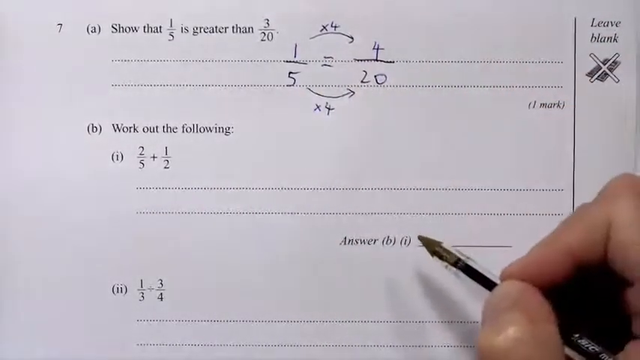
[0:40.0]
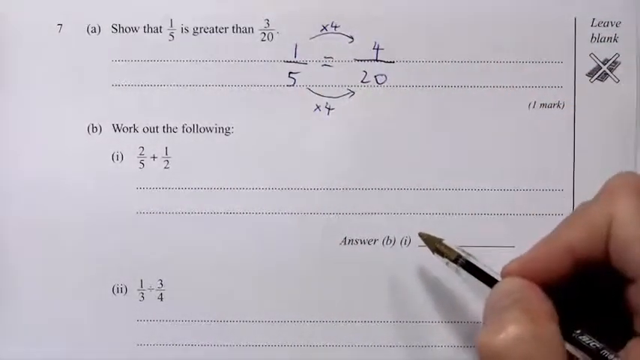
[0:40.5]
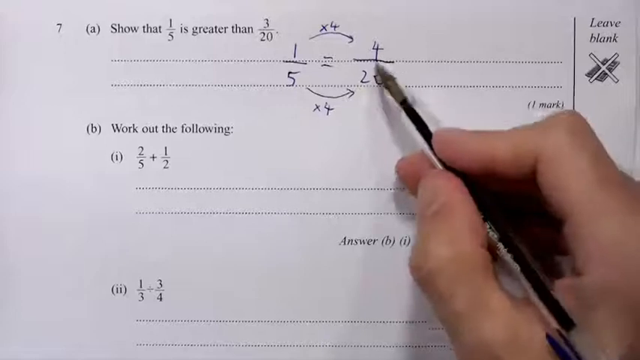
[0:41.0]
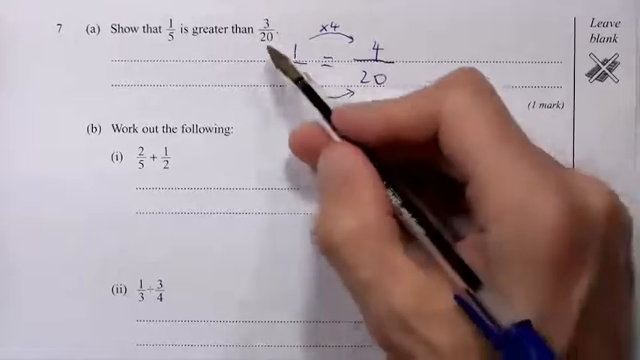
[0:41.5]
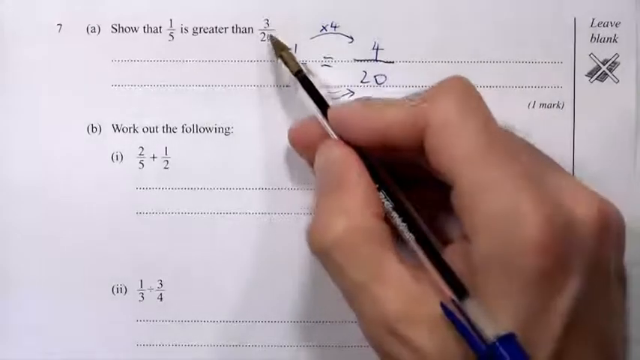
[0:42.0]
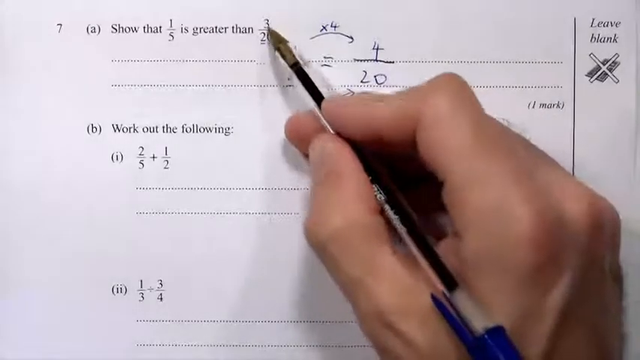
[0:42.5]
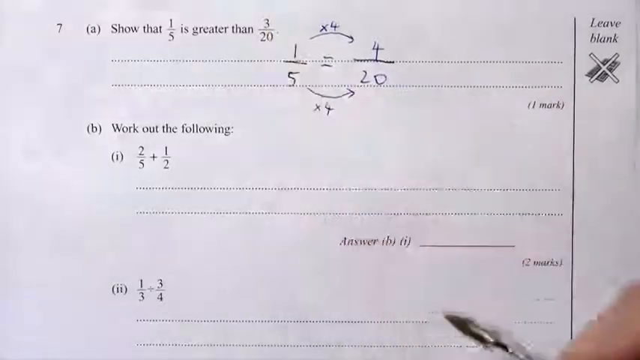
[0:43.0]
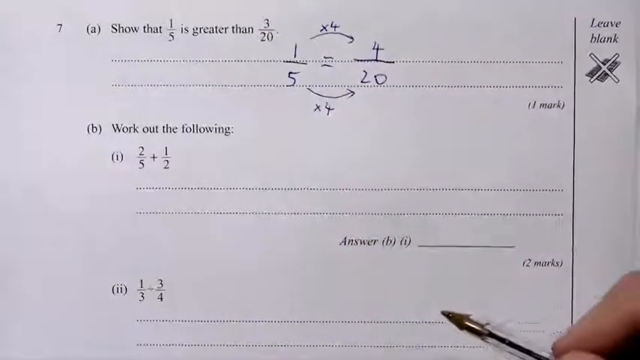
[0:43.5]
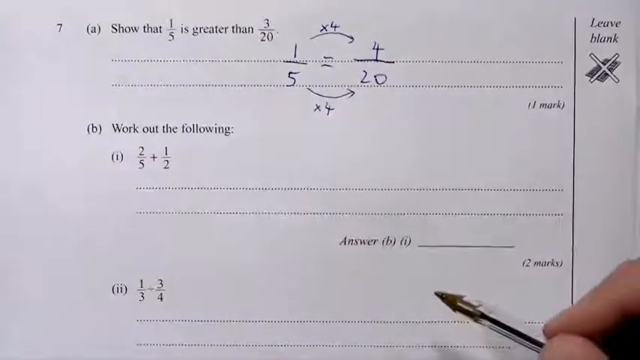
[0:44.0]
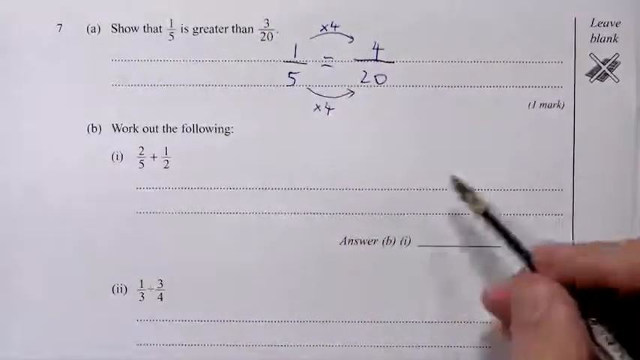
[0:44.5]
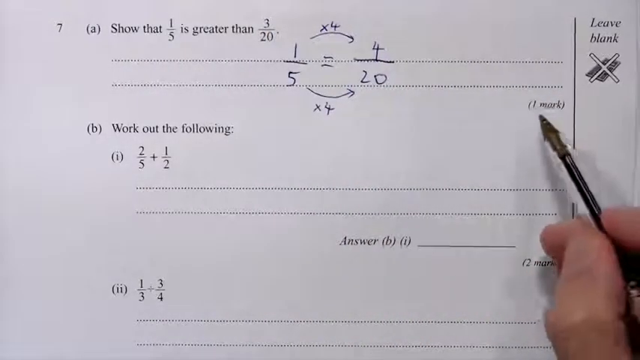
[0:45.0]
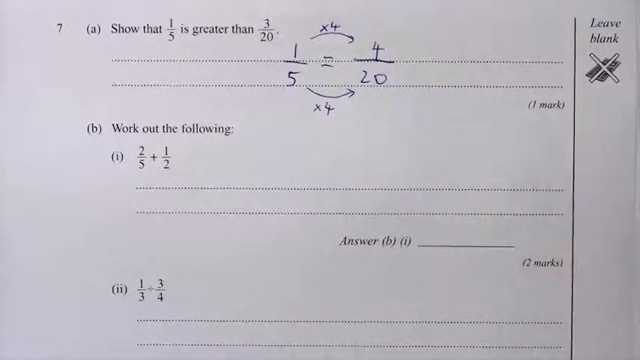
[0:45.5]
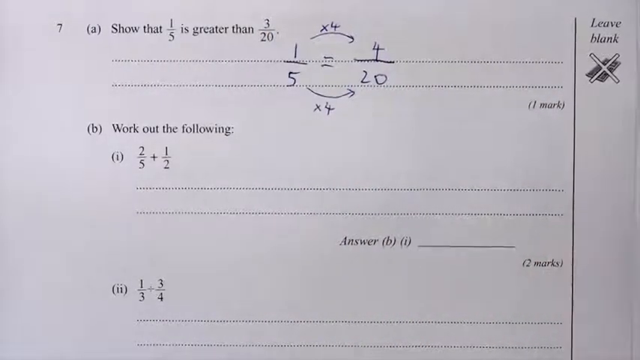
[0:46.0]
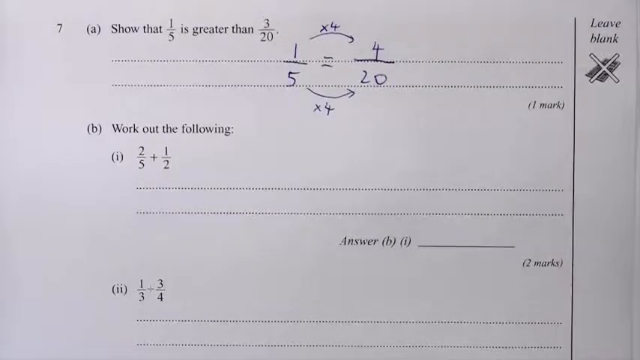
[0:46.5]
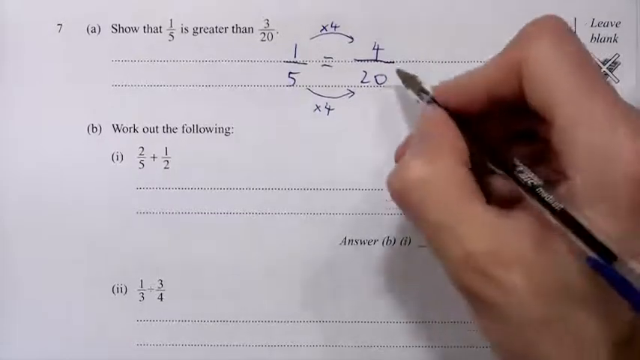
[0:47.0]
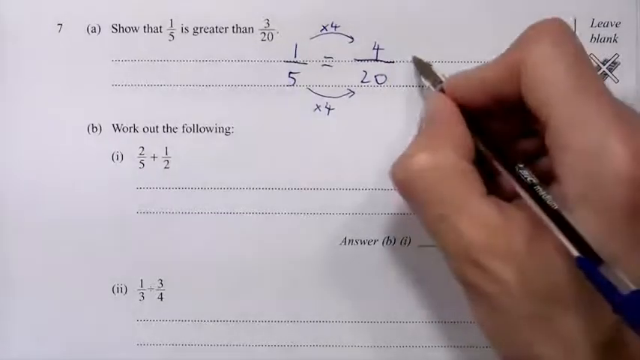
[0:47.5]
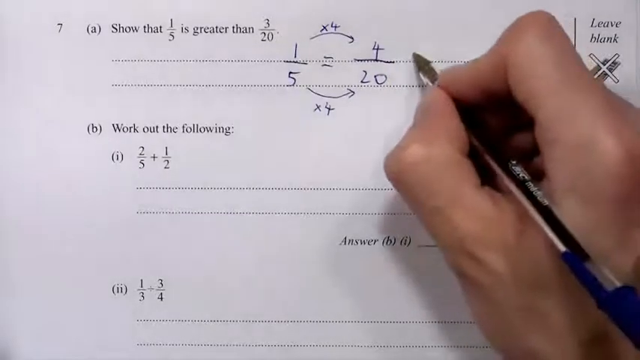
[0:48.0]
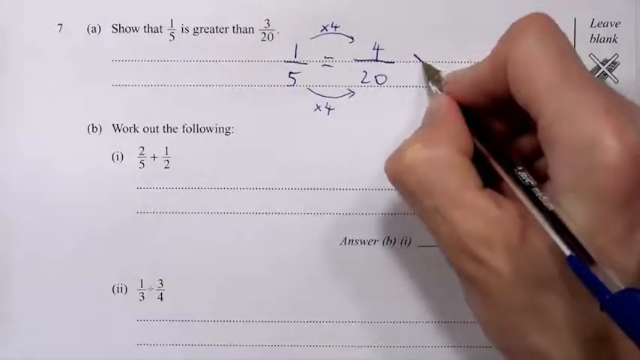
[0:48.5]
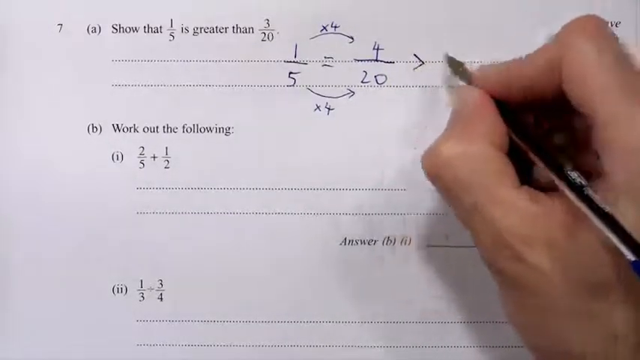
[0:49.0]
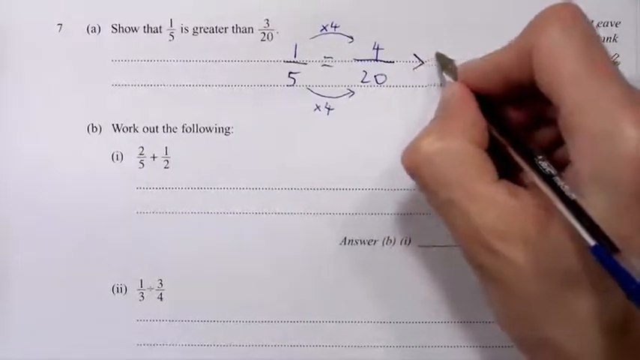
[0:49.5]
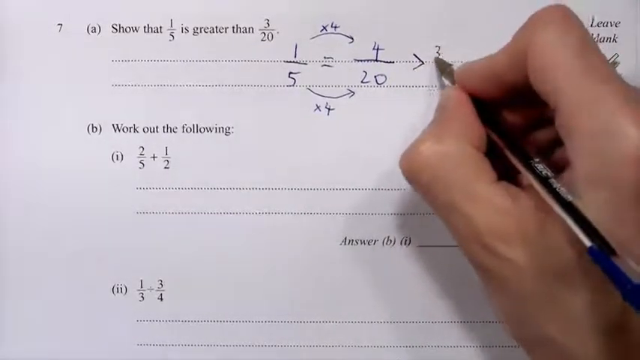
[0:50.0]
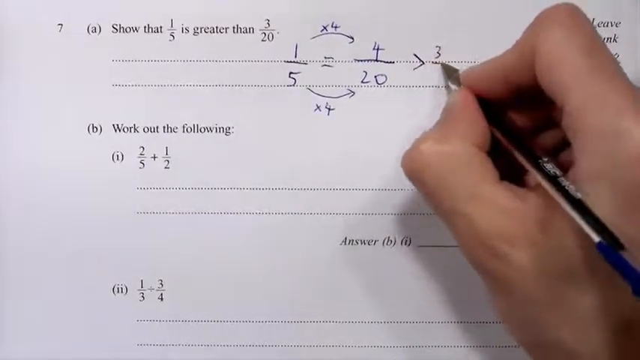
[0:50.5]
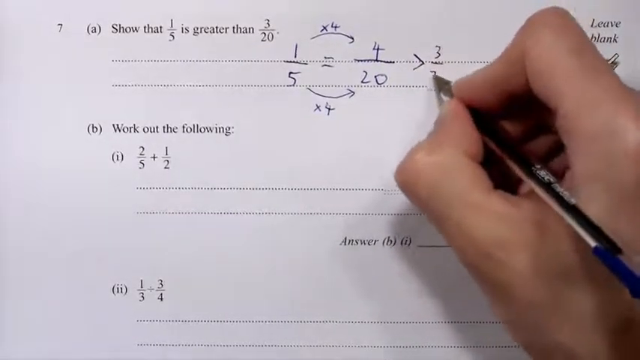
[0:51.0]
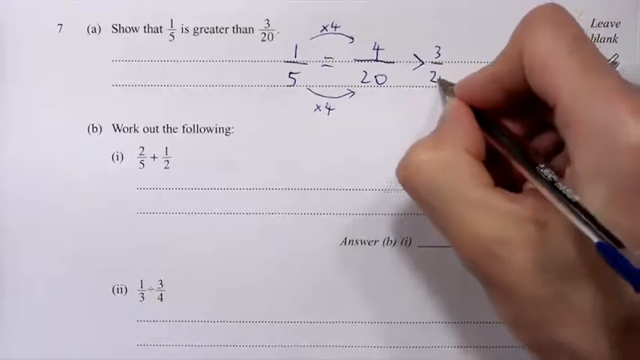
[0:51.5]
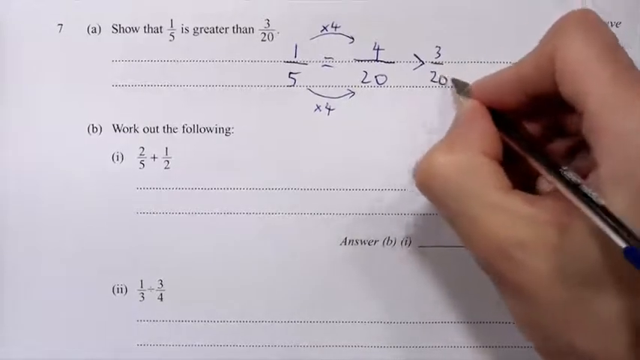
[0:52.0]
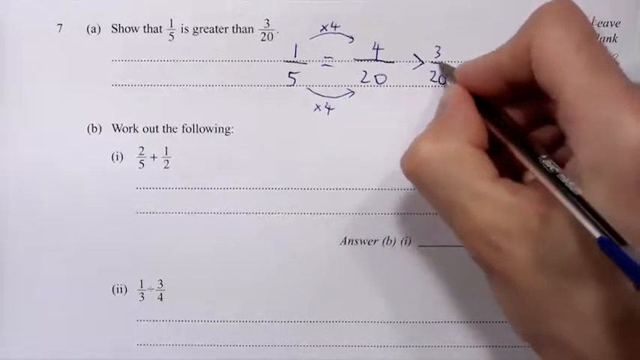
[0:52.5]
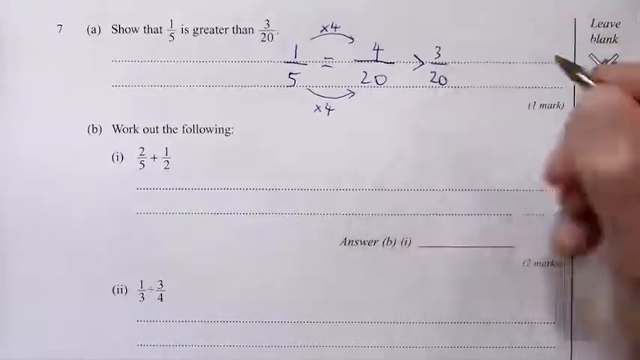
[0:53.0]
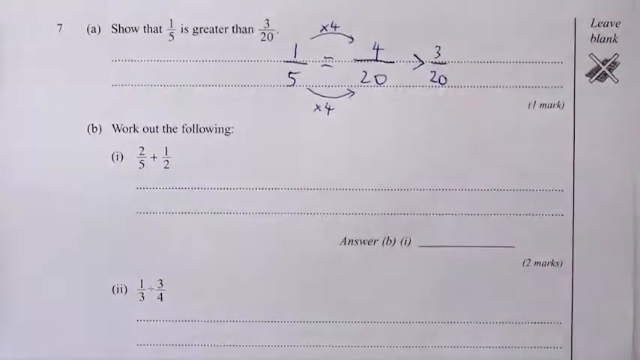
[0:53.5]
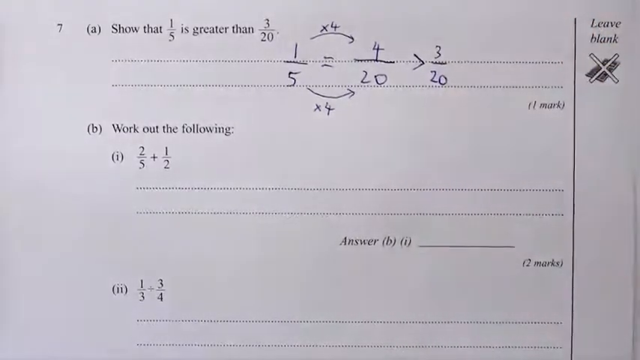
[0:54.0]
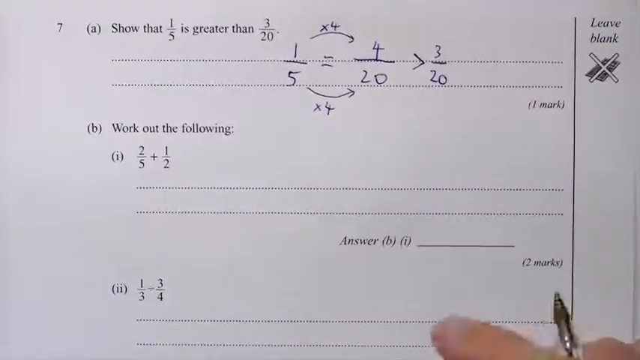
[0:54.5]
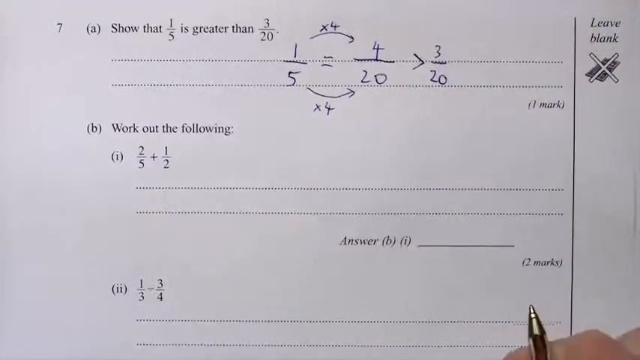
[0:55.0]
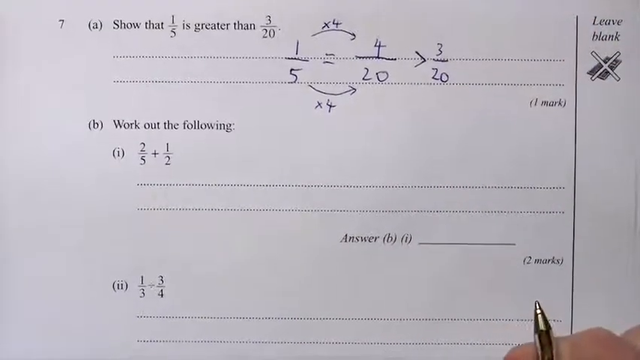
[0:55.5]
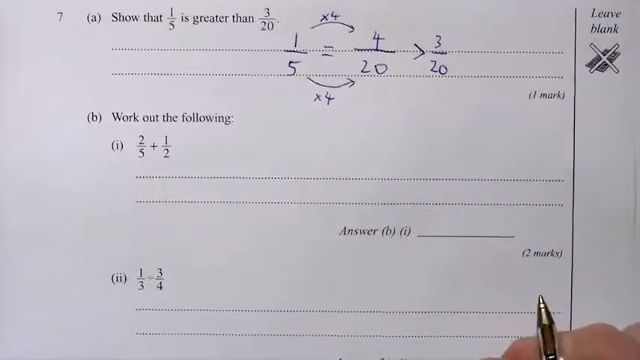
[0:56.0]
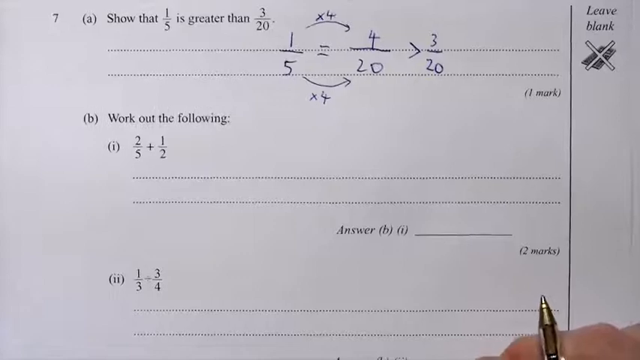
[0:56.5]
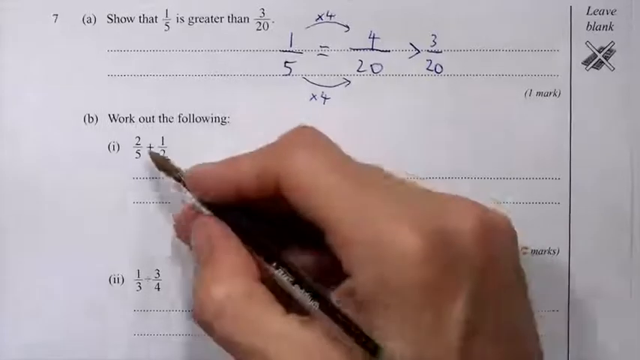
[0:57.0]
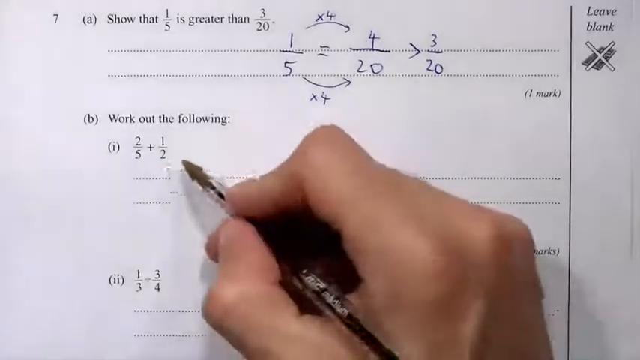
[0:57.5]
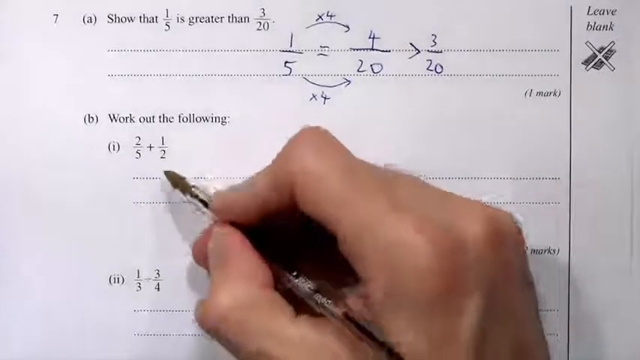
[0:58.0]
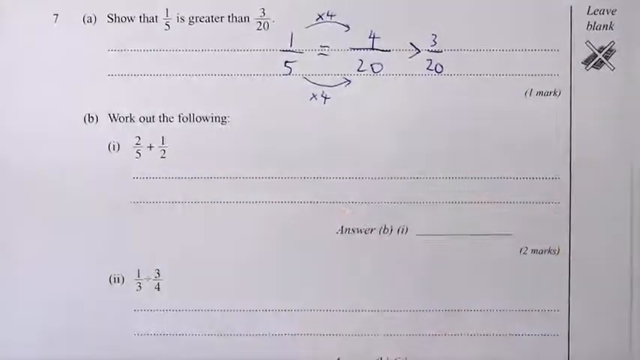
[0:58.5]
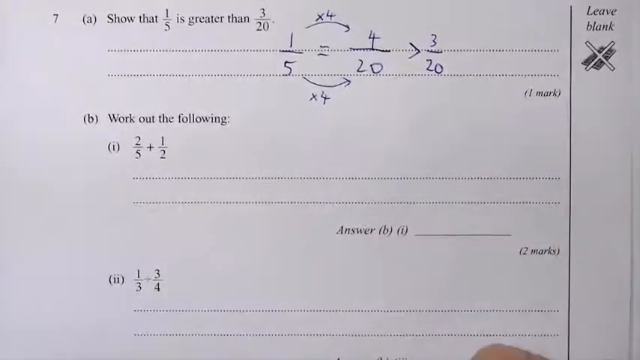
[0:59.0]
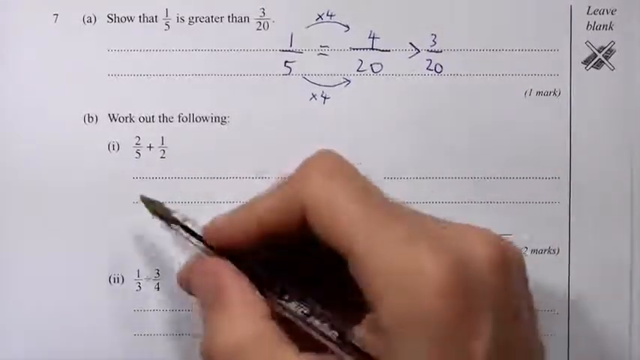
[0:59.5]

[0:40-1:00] The work shows 1/5 equals 4/20, and it appears that 4/20 is marked as more than 3/20, demonstrating that 1/5 is greater than 3/20.